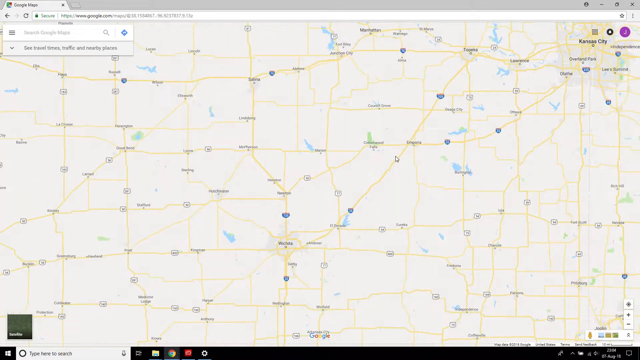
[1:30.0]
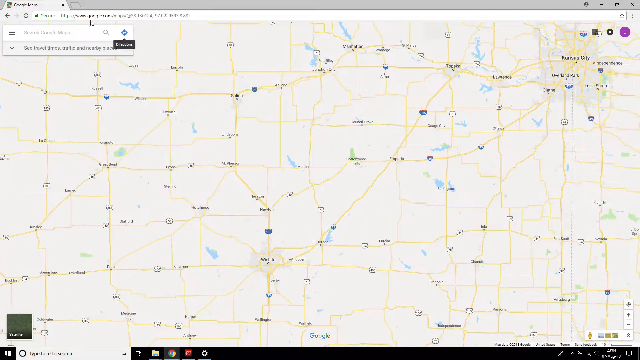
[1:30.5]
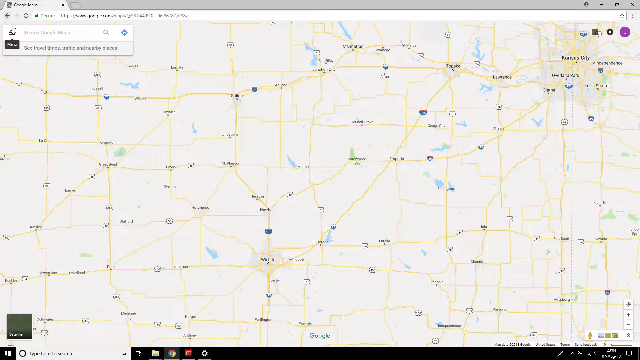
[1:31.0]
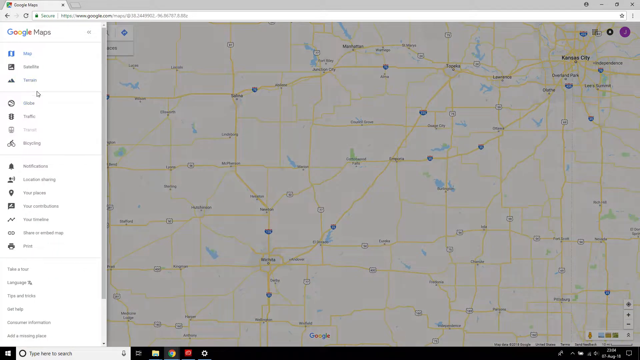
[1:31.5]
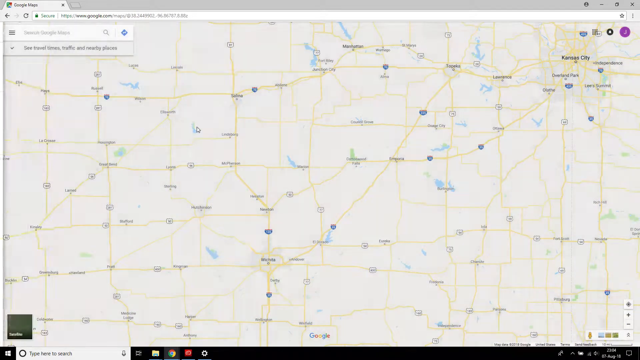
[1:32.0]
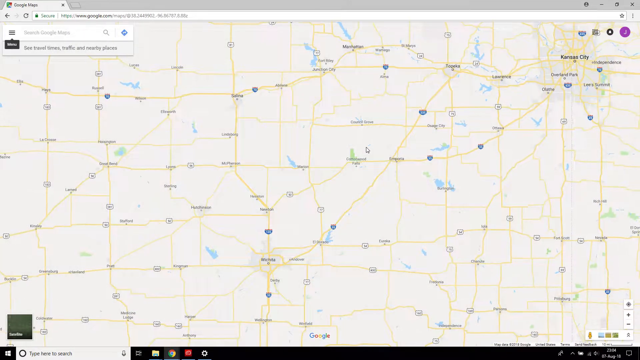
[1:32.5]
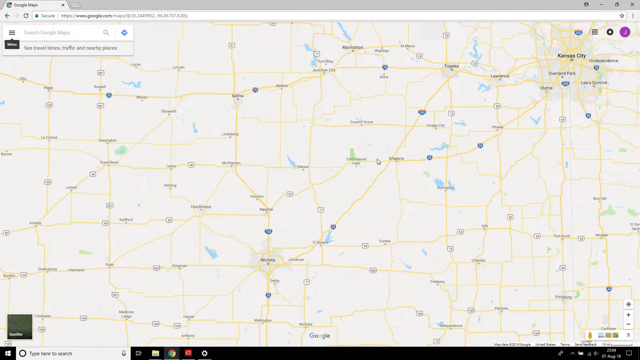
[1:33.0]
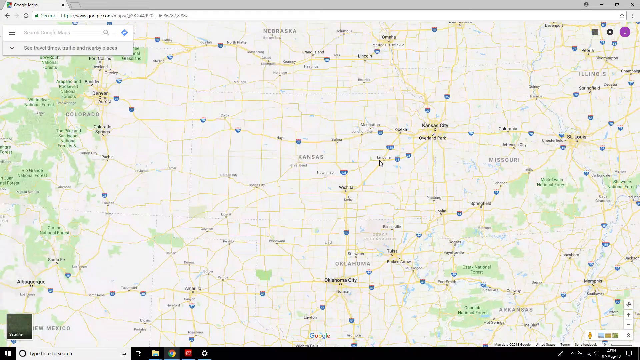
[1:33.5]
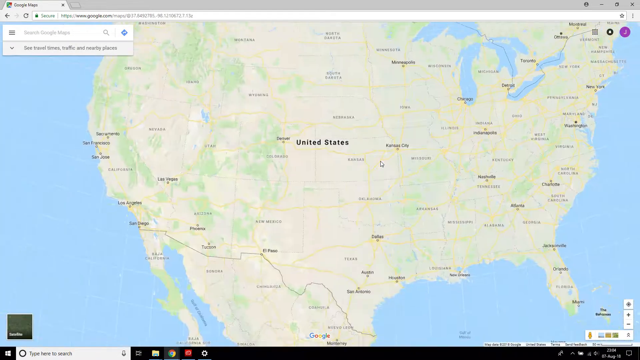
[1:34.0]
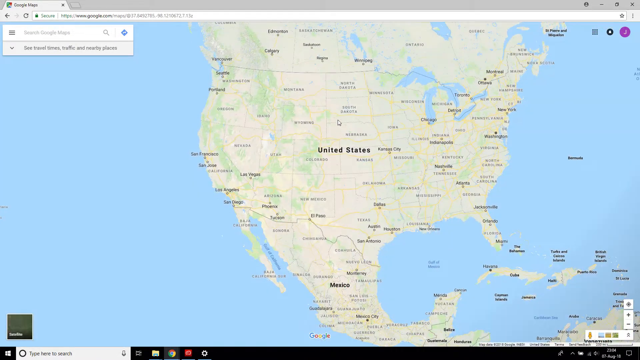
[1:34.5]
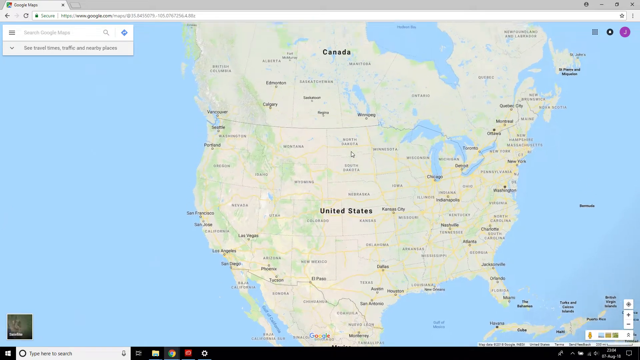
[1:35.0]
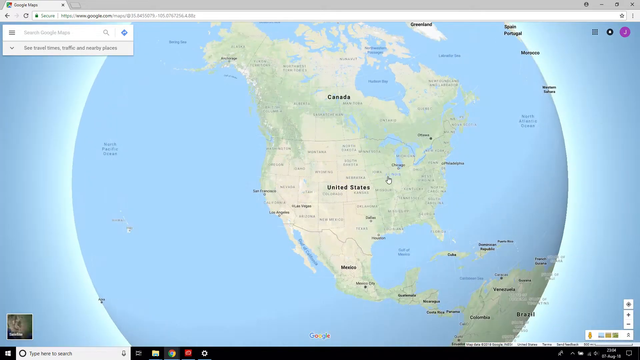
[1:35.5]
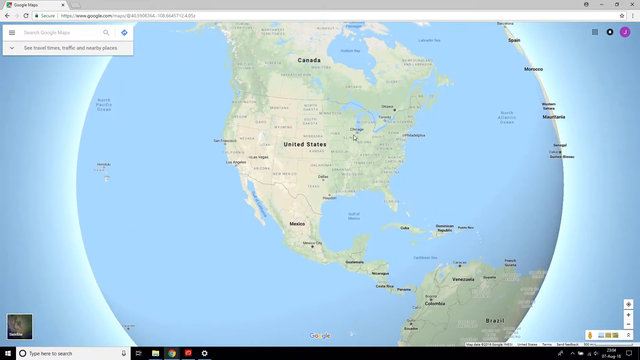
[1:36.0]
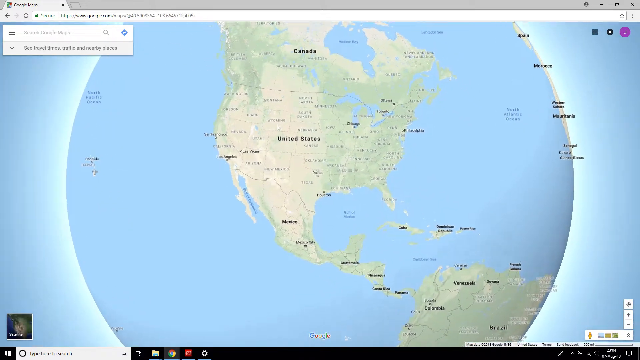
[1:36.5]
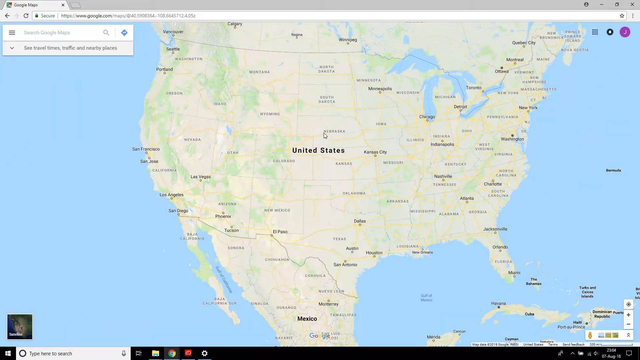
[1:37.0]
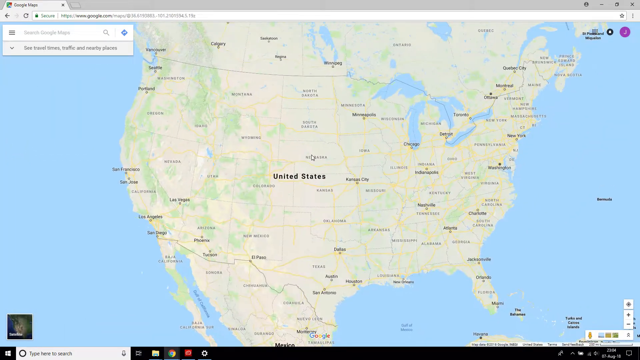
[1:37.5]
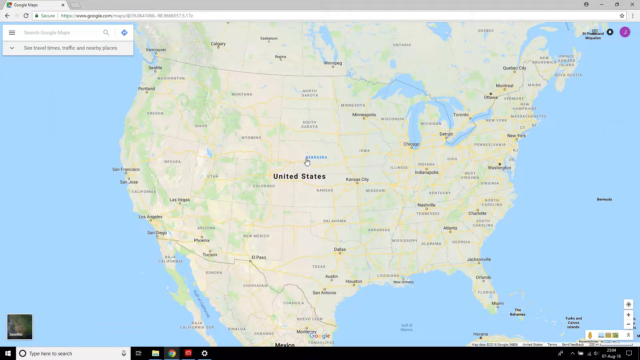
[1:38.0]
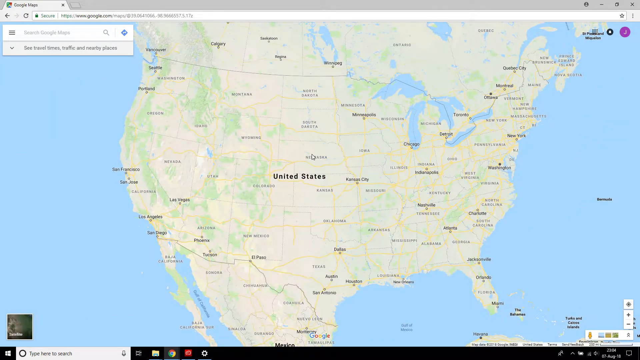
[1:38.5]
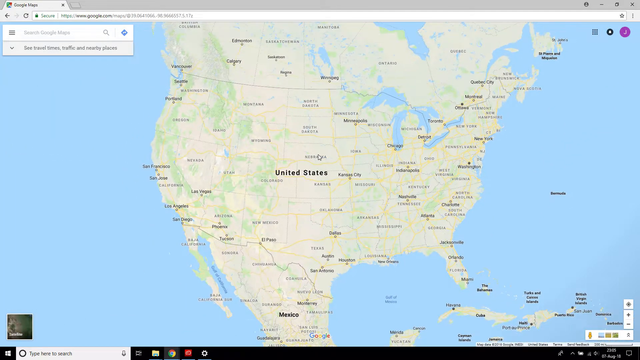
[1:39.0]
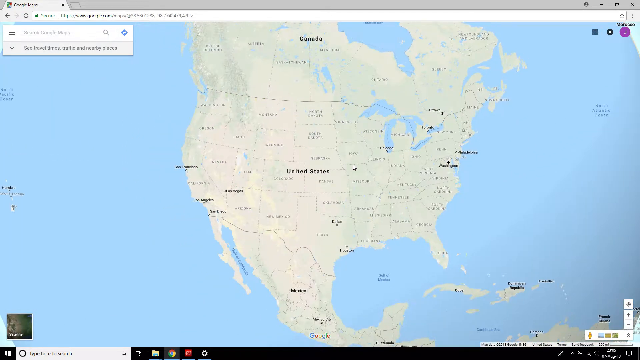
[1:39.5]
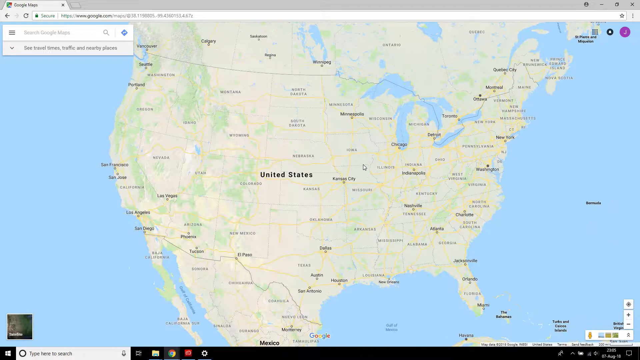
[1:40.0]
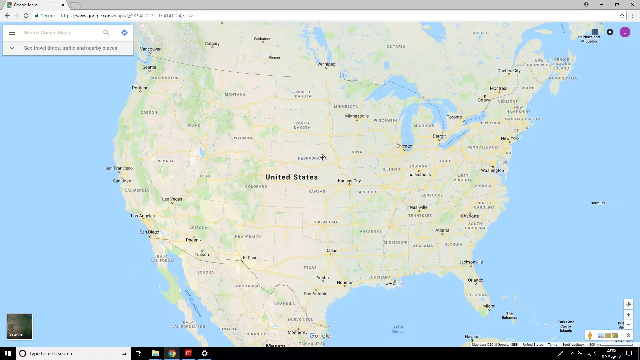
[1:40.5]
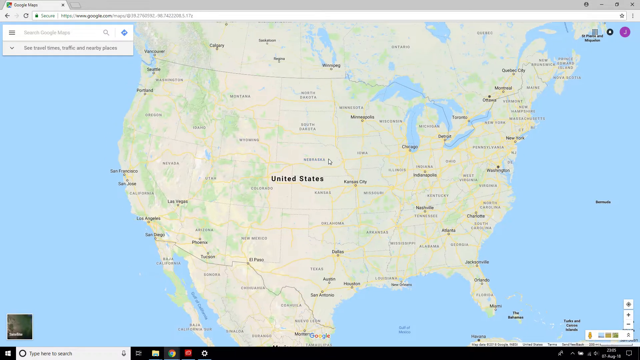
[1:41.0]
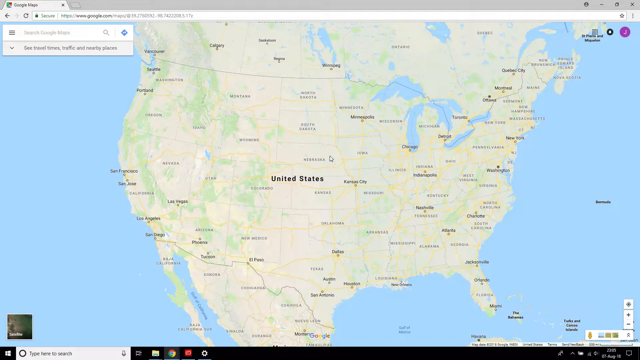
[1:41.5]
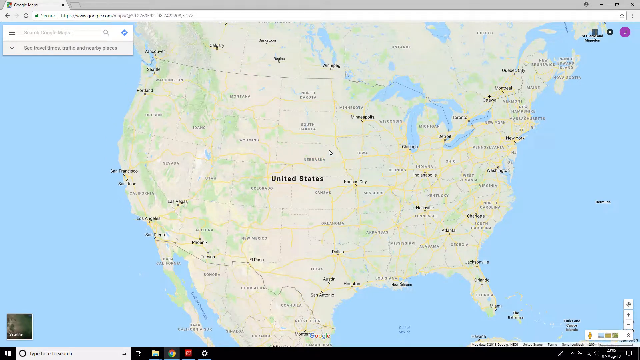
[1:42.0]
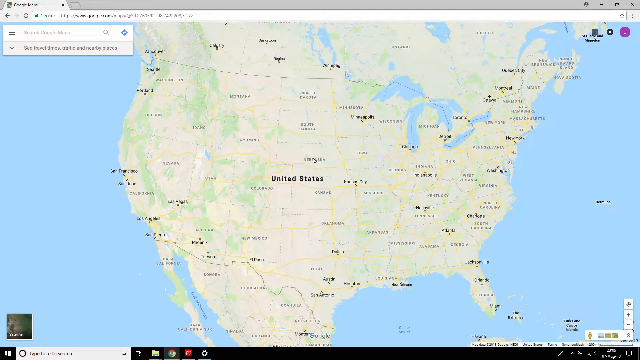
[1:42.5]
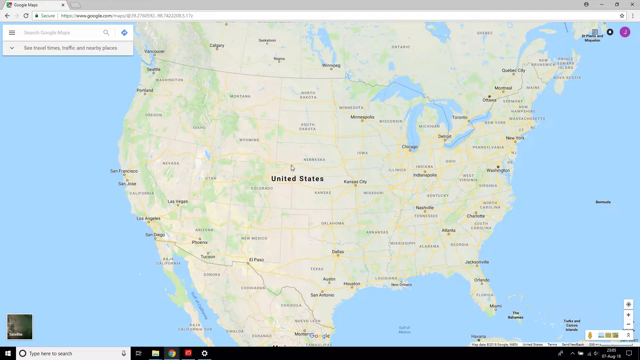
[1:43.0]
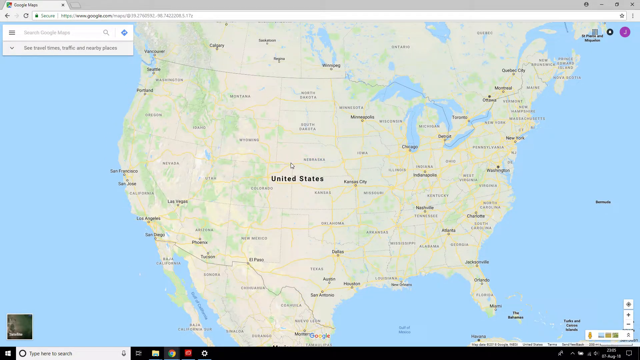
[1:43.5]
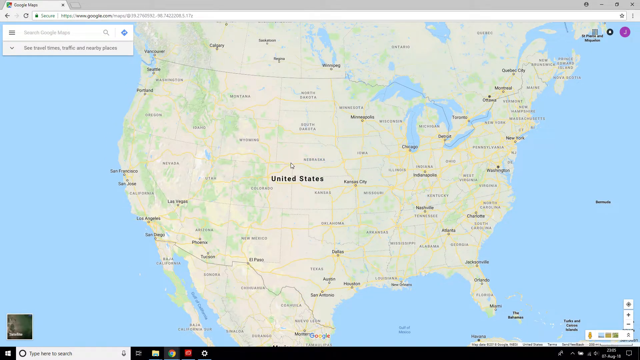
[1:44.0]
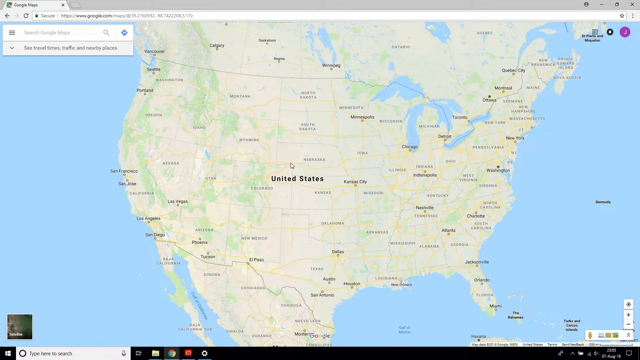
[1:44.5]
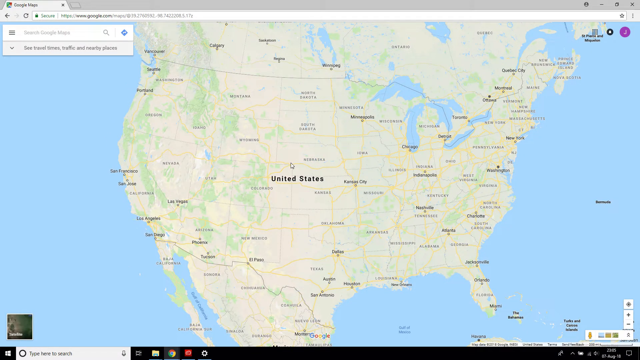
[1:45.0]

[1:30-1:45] The map is zoomed all the way in on what seems to be Kansas, and the person looks around, maybe at the highways. Then they suddenly zoom all the way out so the view shows not just the U.S. but Canada and Mexico too. They zoom back in a little and seem to be pointing at Nebraska. The U.S. is centered on the screen, with a little bit of Canada and a little bit of Mexico visible.